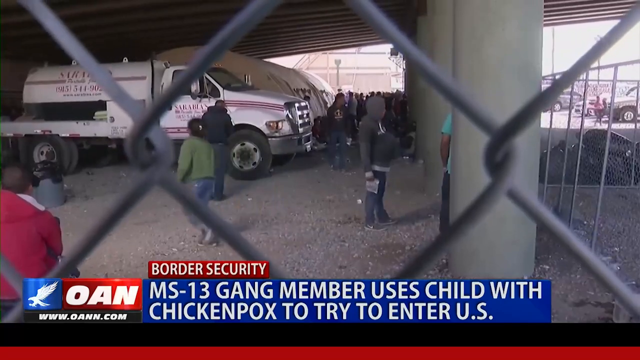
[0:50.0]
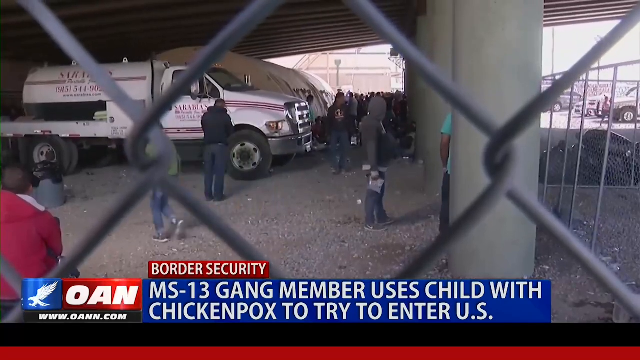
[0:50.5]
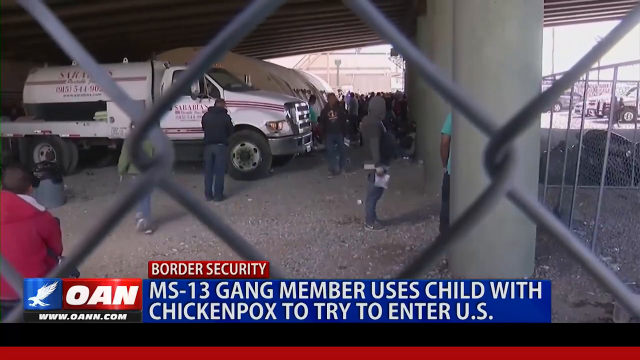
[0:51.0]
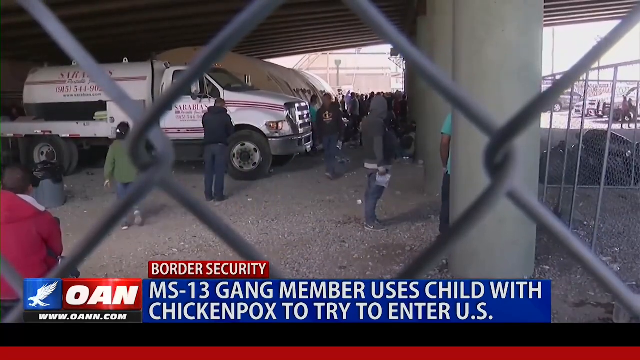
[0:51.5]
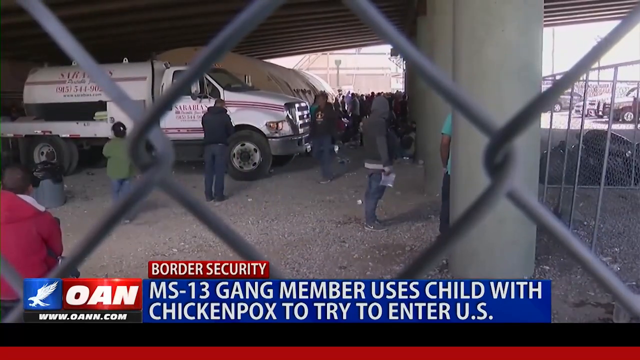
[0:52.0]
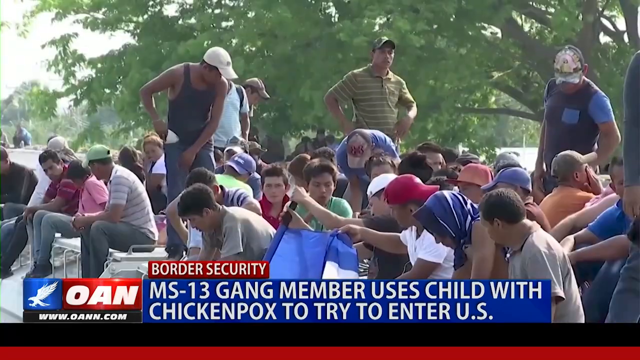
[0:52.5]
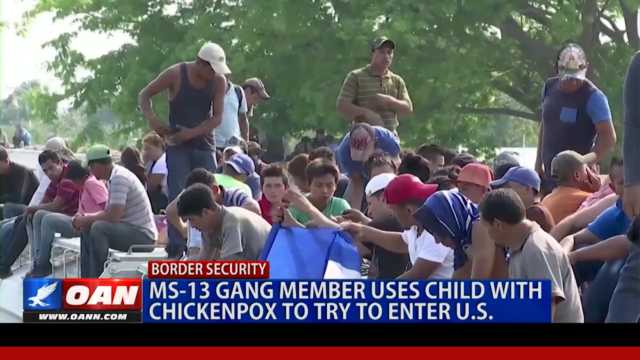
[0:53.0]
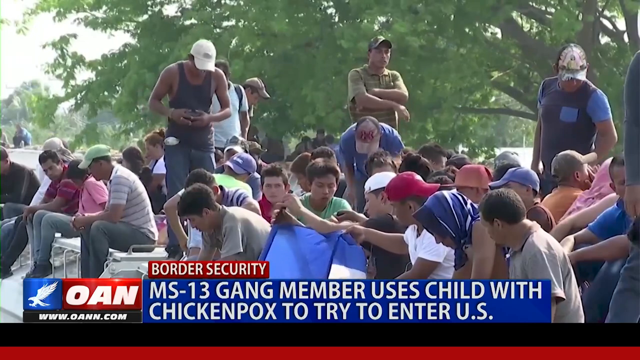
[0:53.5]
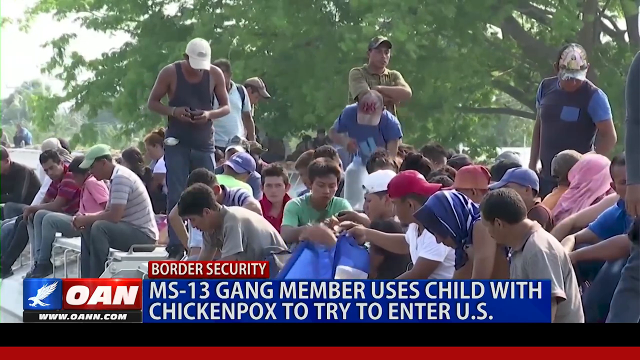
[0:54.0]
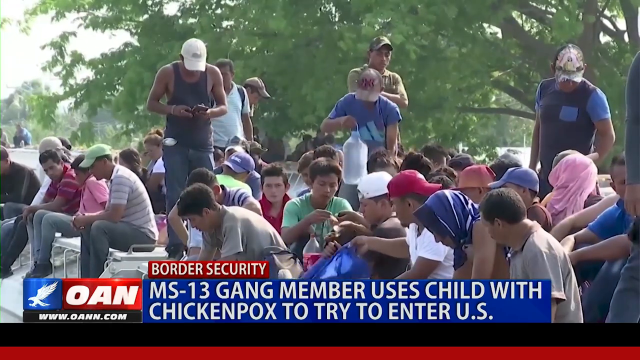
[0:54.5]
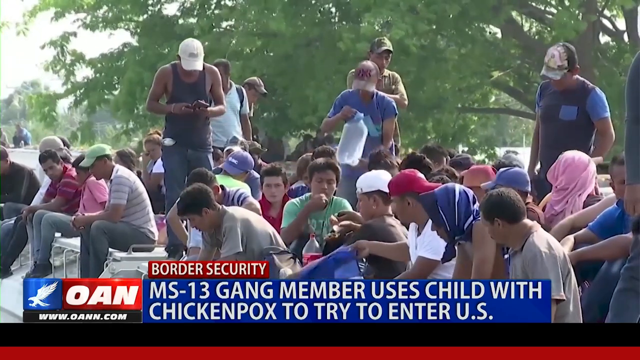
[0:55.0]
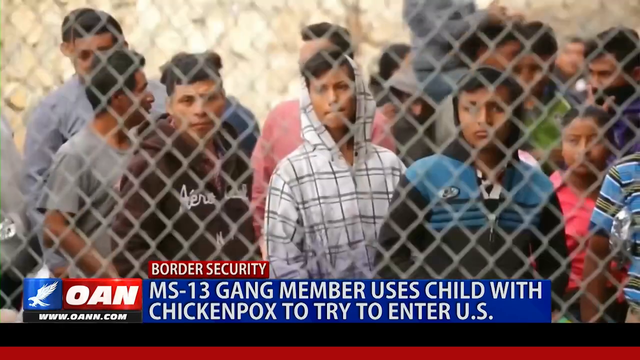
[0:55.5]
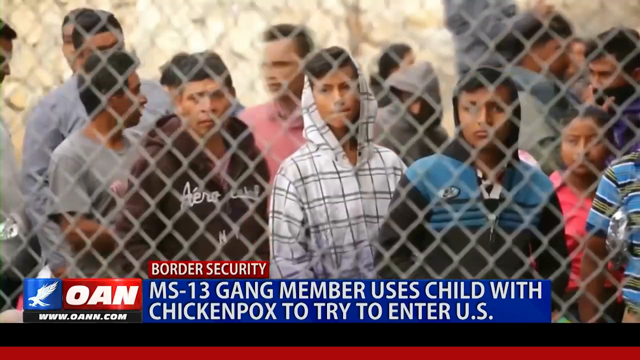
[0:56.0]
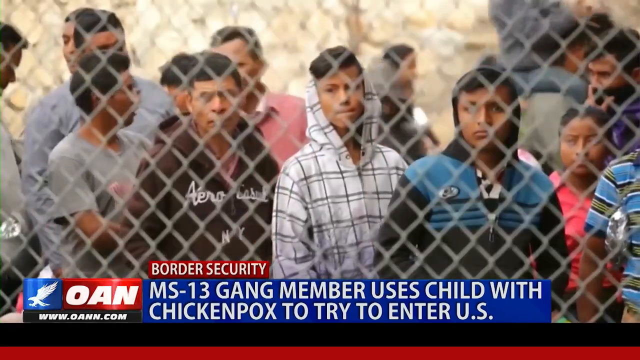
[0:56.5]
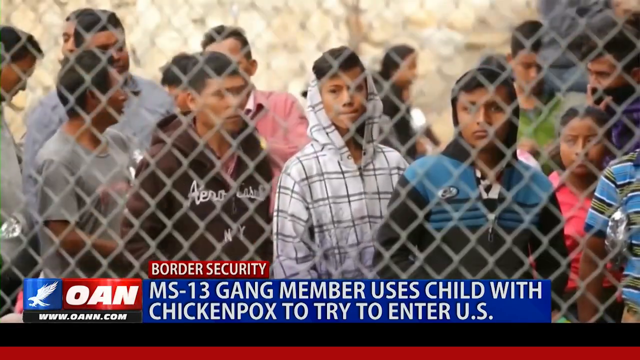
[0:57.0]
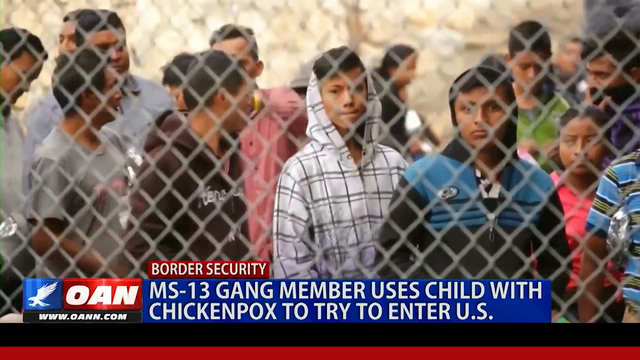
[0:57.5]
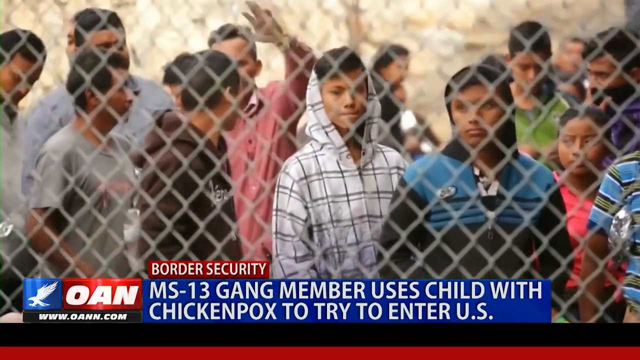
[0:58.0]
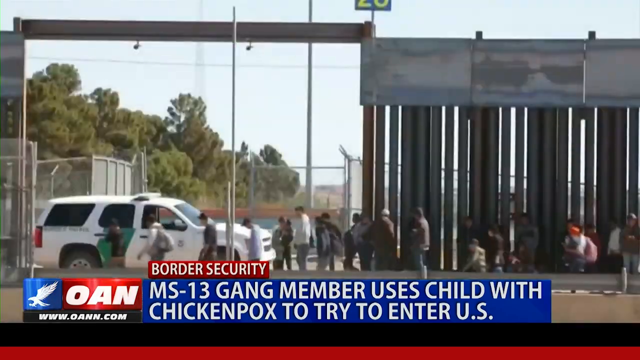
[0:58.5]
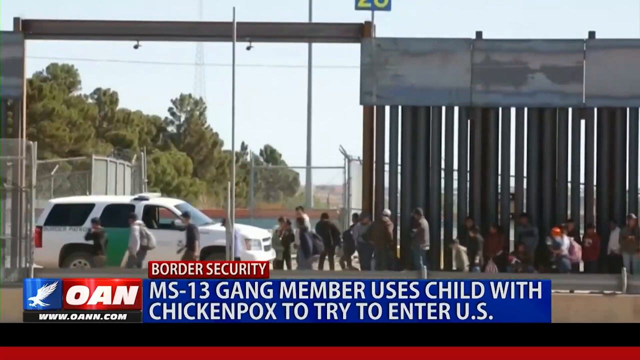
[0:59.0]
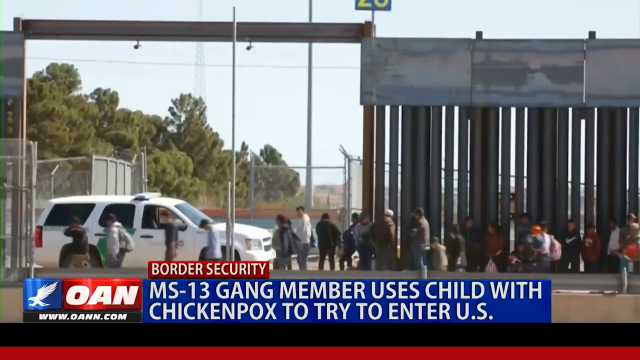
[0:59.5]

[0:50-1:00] At the border, a lot of people are sitting around outside. Their clothes are clean and neat and their hair looks clean and washed. Most of the people at the border are military-age men.